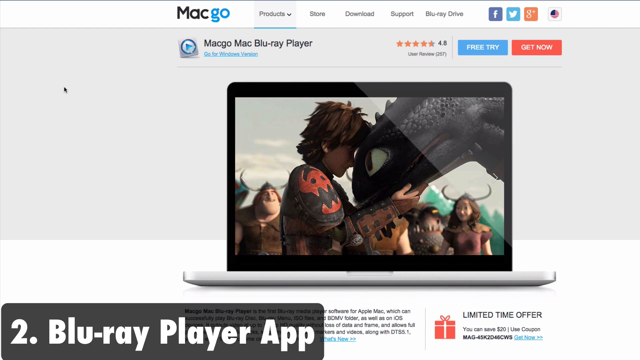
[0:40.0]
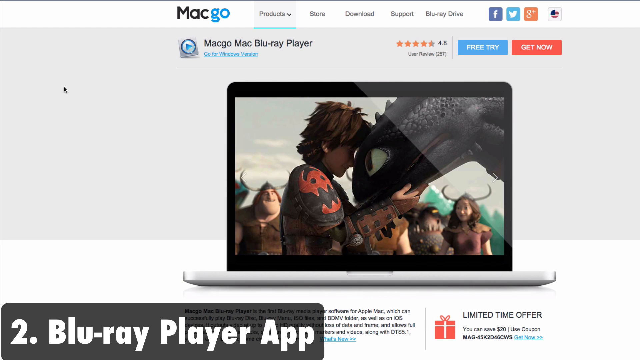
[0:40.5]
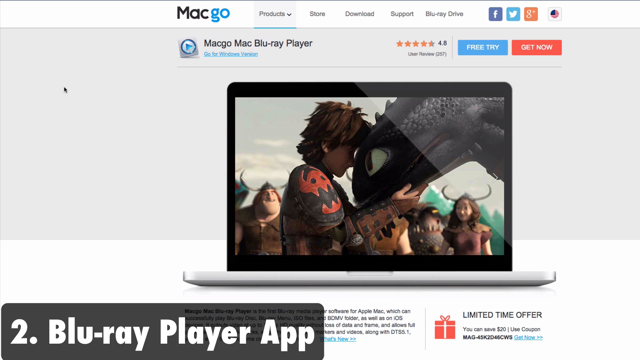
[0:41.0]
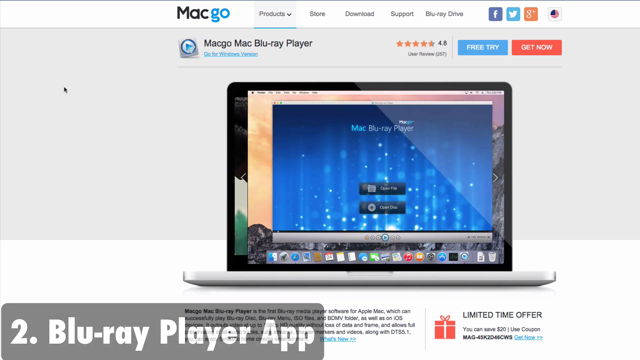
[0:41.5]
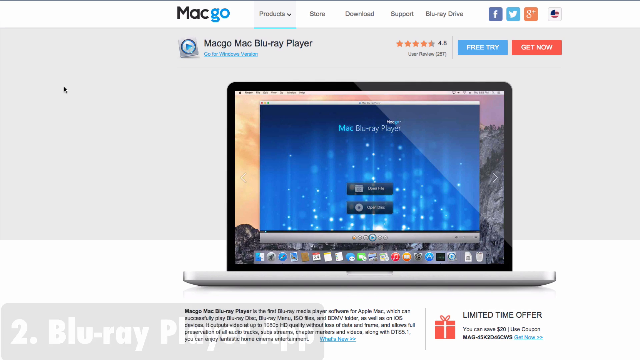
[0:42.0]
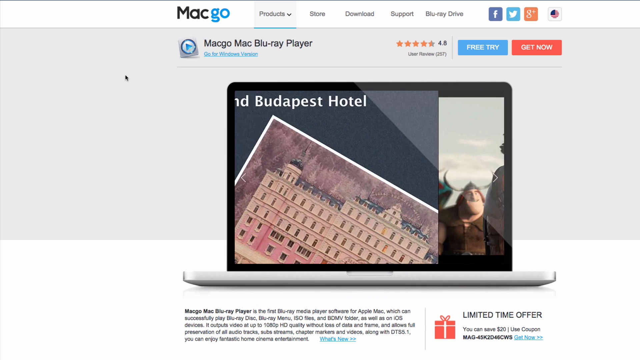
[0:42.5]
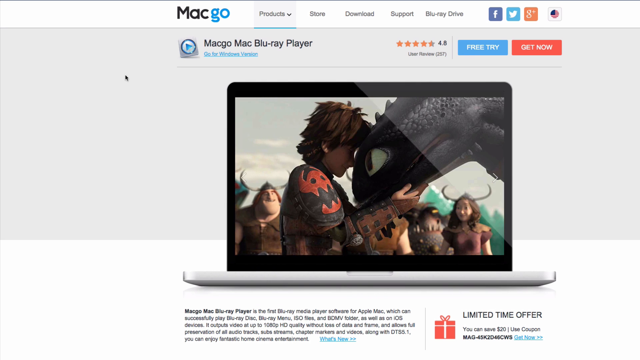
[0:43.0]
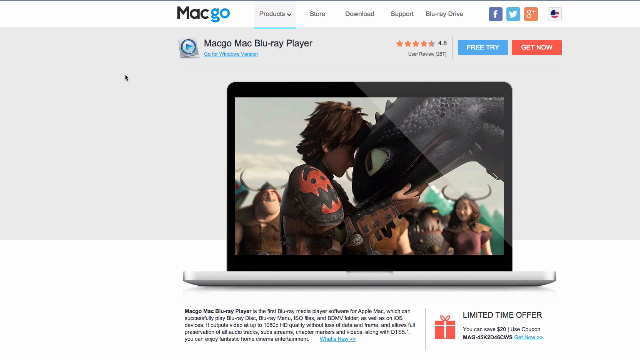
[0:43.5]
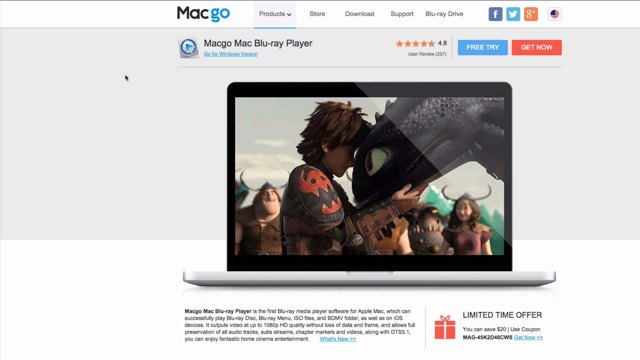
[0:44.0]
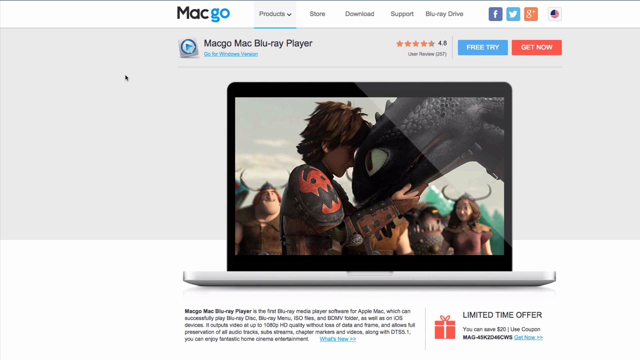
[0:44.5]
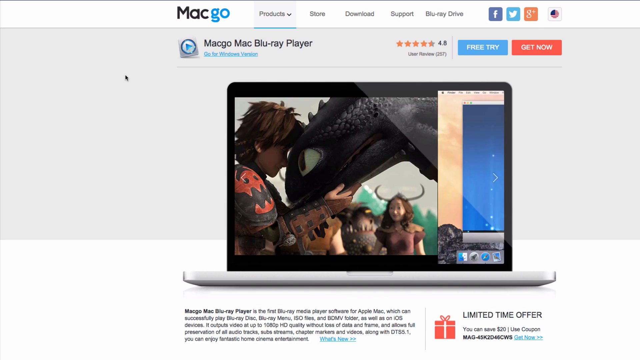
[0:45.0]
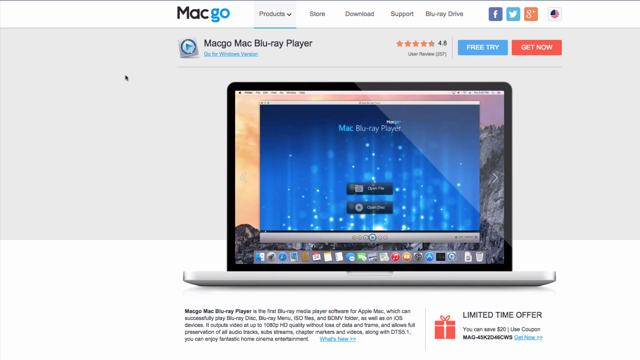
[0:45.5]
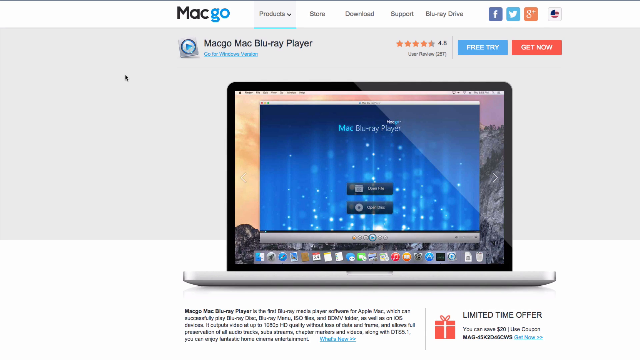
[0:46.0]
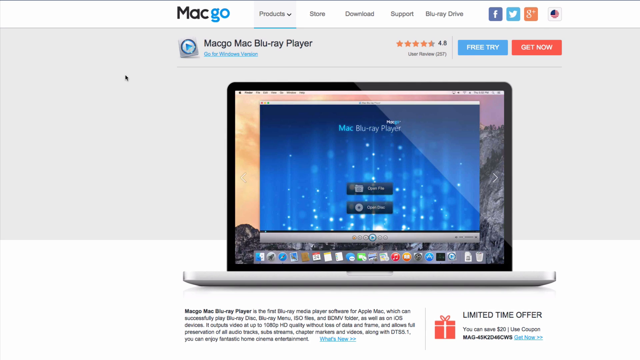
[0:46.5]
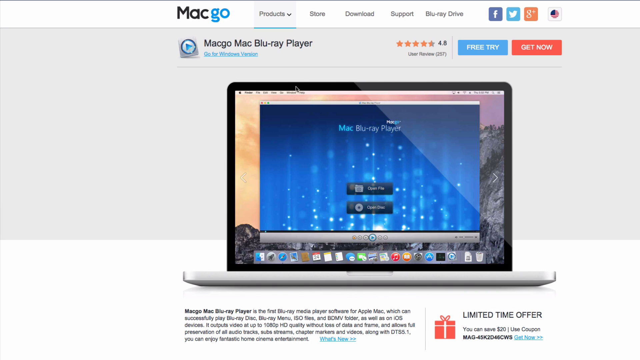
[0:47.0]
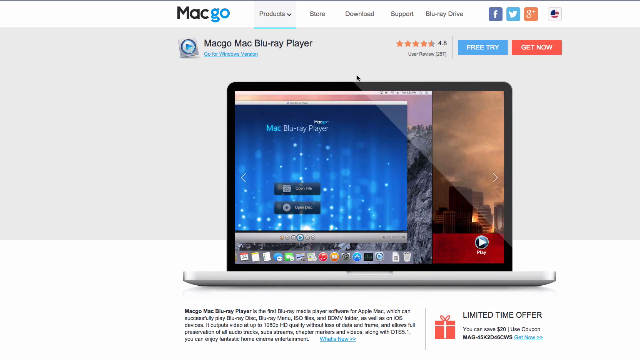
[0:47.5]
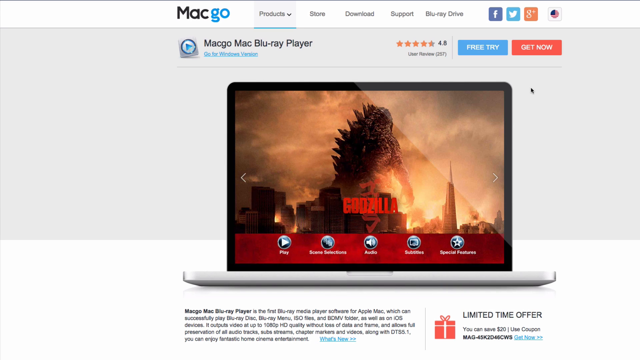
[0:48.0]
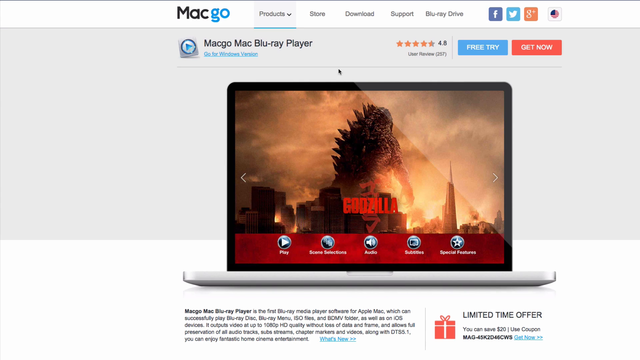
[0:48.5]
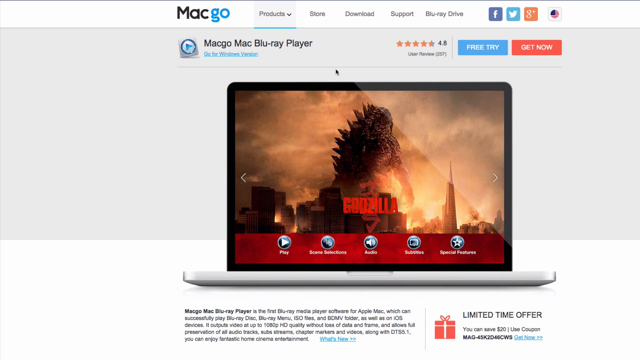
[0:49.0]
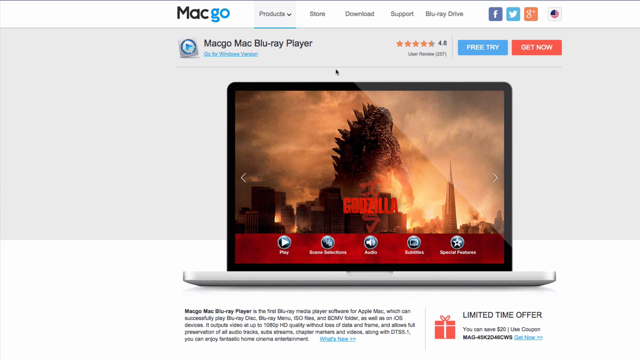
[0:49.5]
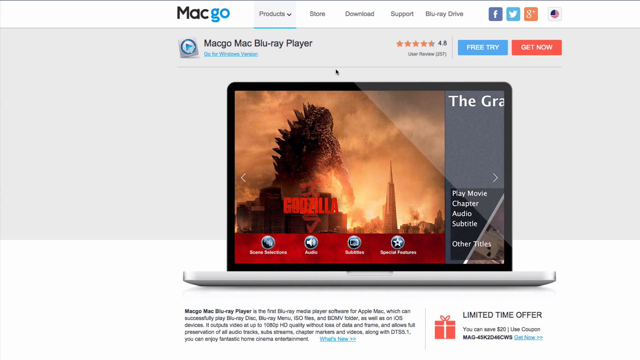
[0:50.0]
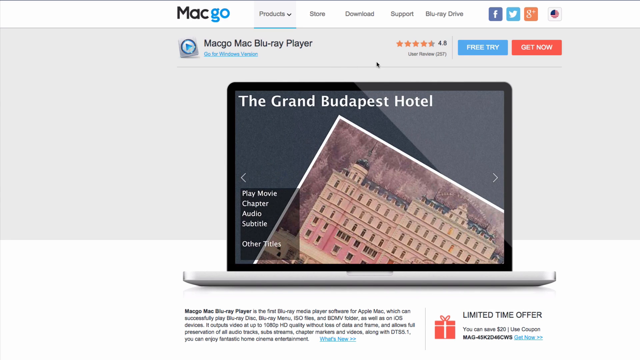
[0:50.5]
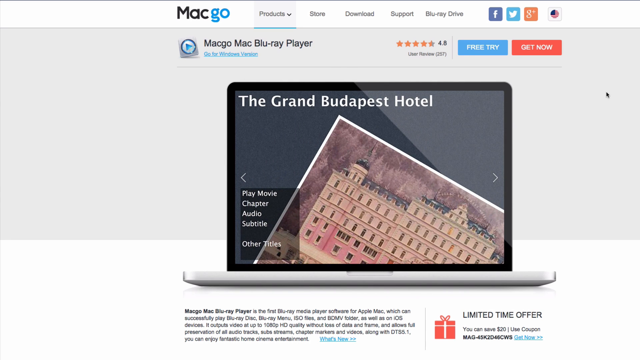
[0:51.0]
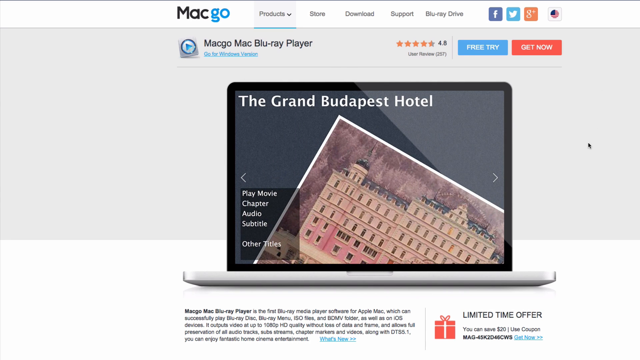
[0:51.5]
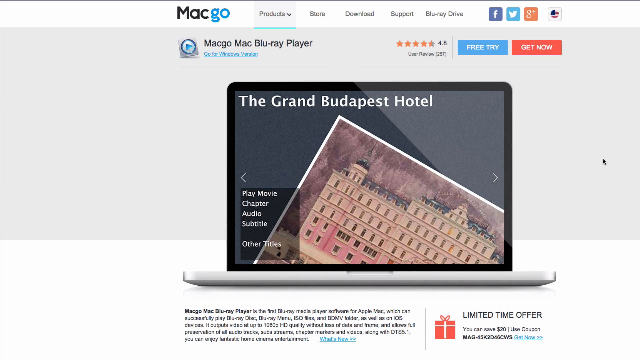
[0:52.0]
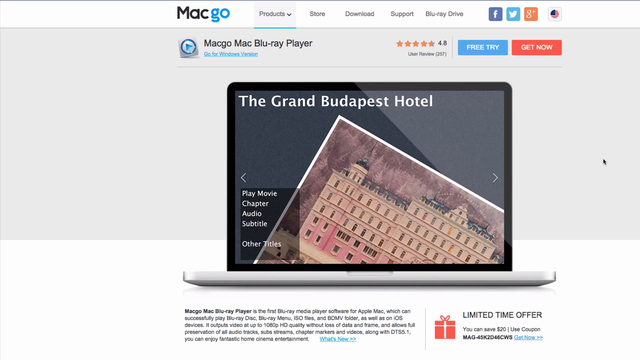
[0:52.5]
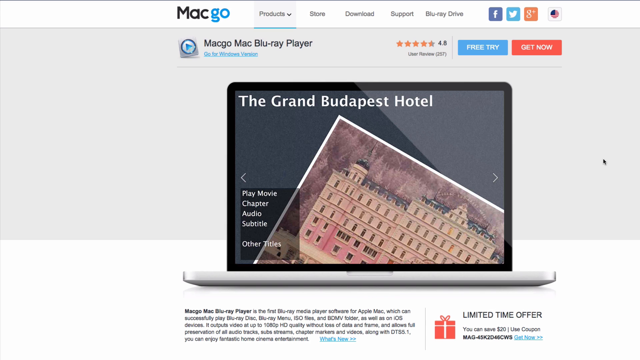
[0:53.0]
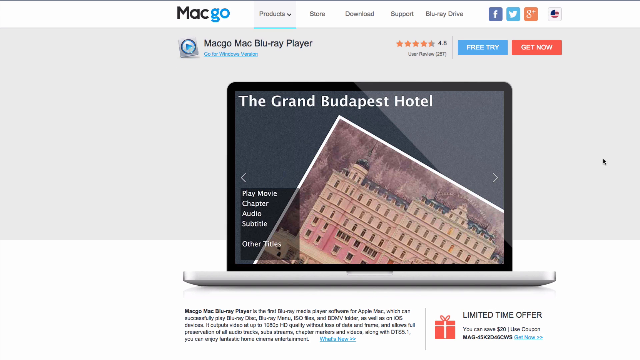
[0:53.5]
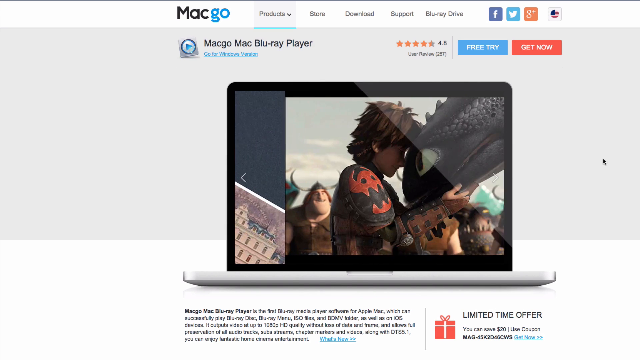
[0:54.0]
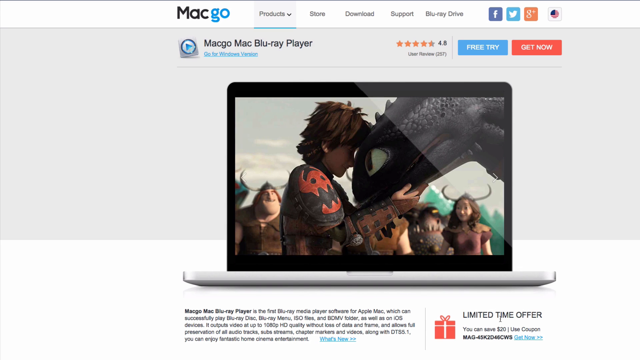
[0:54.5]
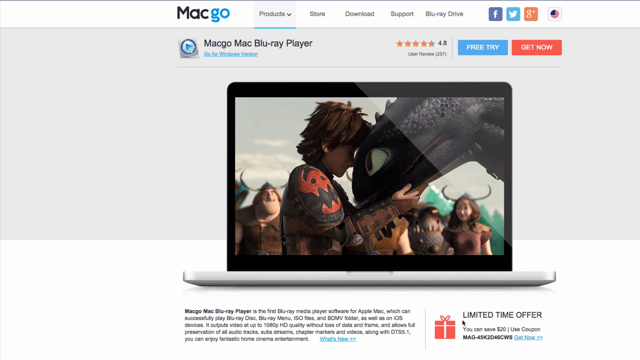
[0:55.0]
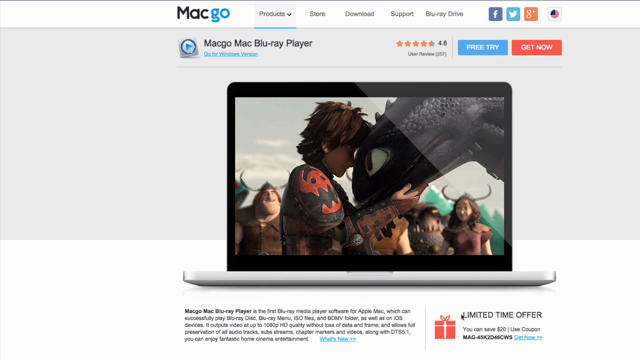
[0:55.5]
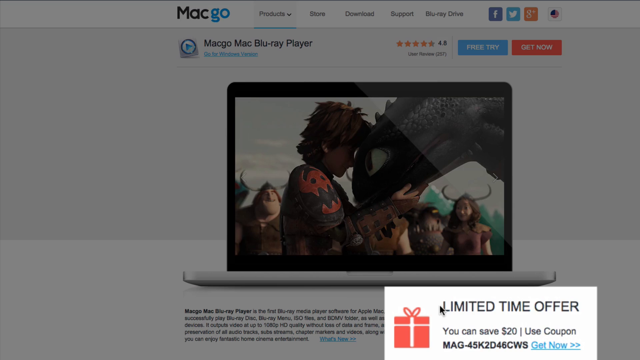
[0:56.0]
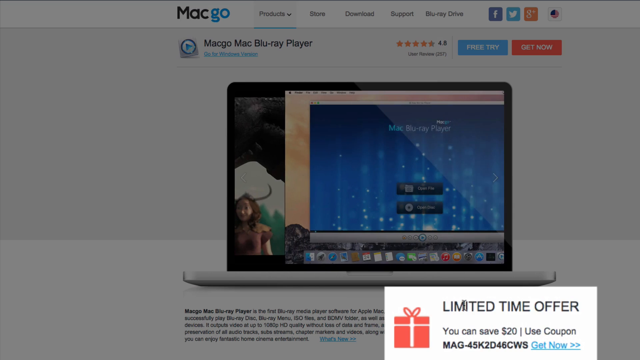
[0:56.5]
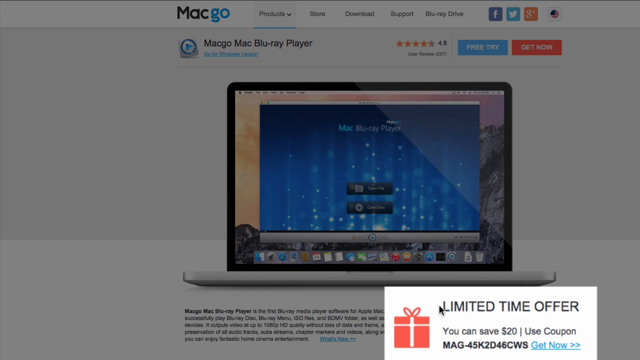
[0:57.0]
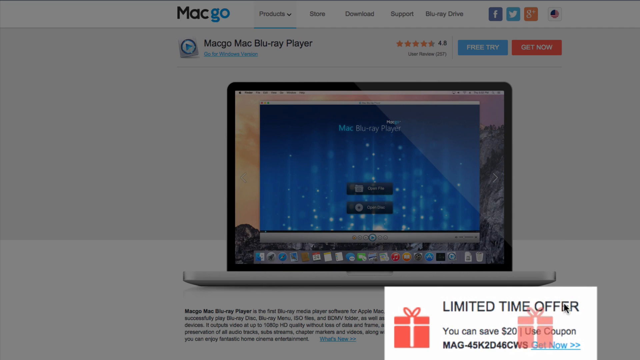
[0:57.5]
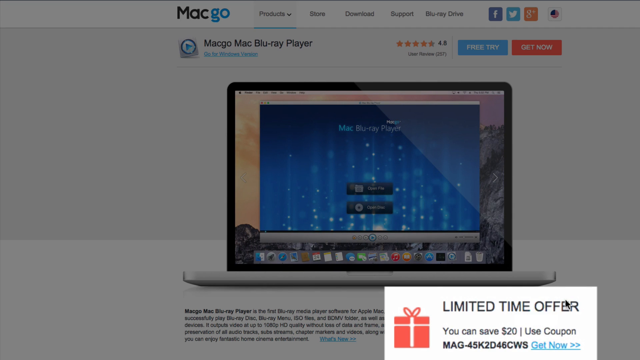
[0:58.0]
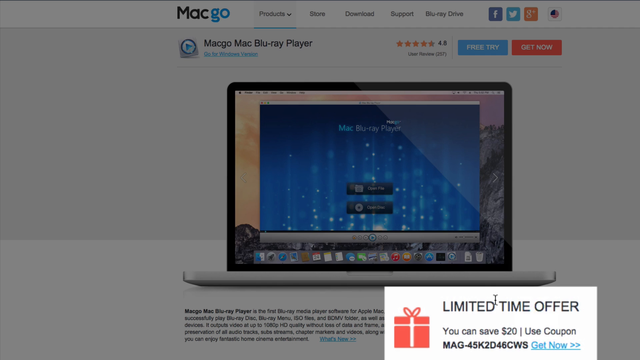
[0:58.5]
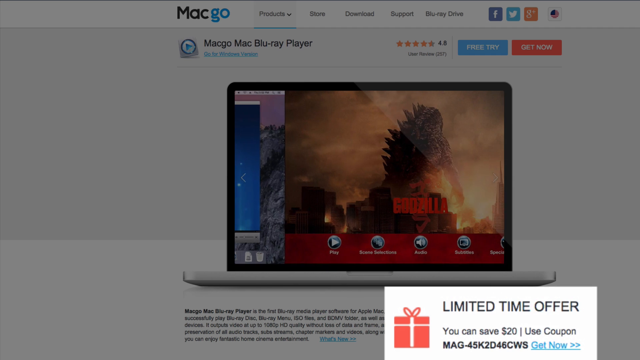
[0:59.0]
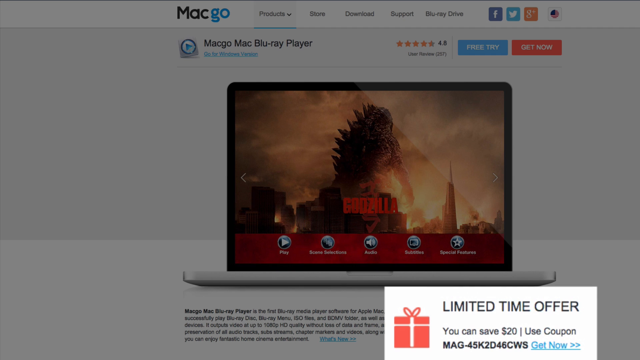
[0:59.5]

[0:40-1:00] The Mac Go page shows different things on the Mac, from Godzilla, to the Grand Budapest Hotel, to a movie with some type of black dragon. In the lower right, a white box pops up reading "Limited Time Offer" and "save $20, use coupon," with a small red graphic of a present: a red box with a white bow and ribbon. No Blu-ray player device is visible. Then something pops up on the screen reading "Blu-ray player app."